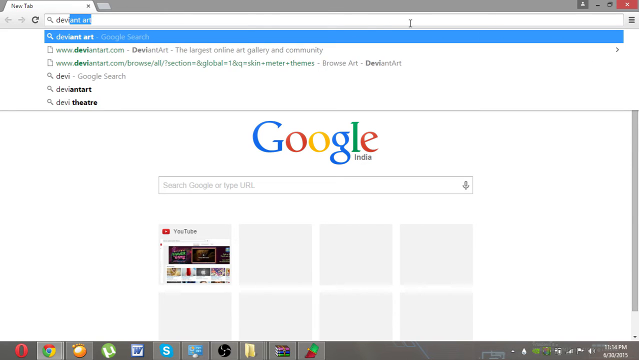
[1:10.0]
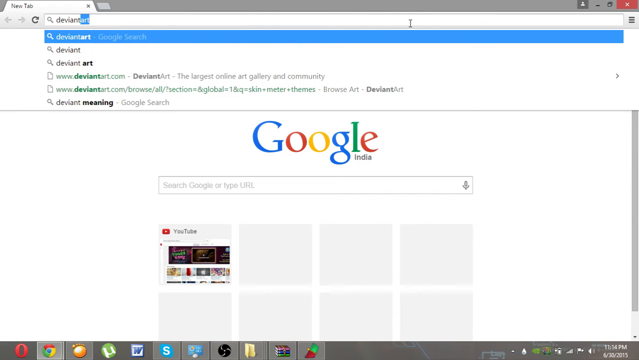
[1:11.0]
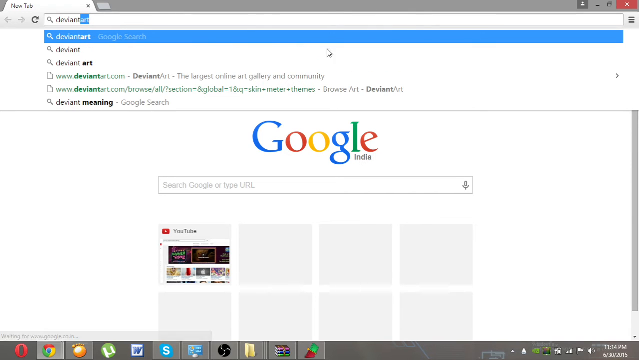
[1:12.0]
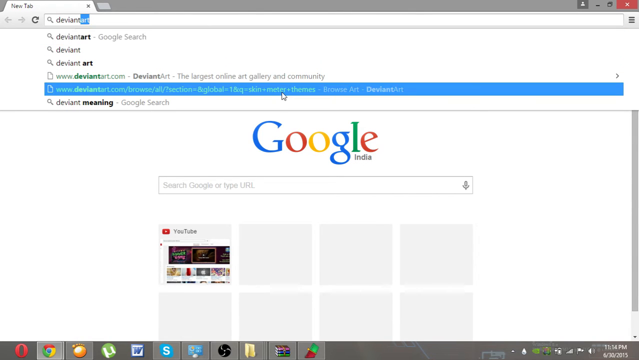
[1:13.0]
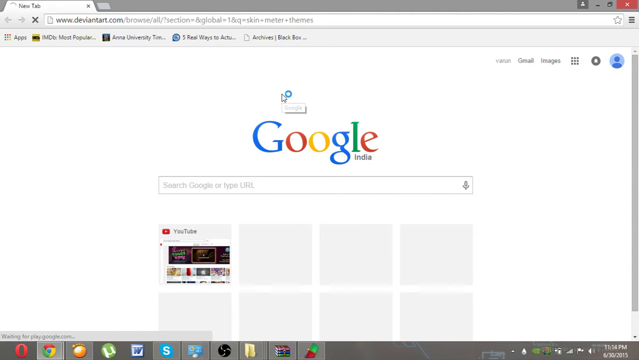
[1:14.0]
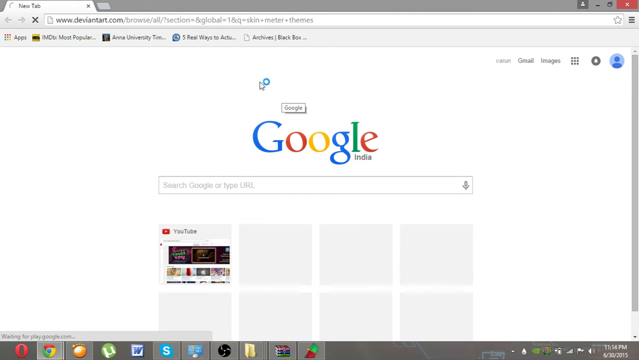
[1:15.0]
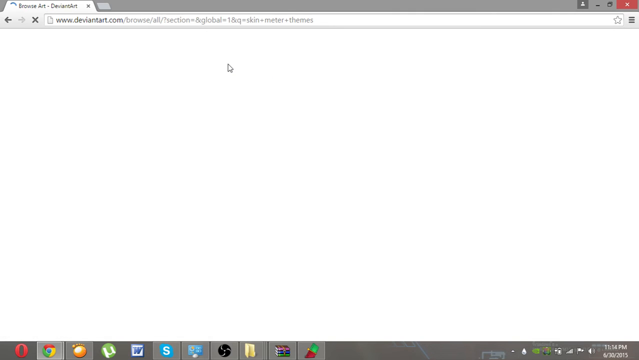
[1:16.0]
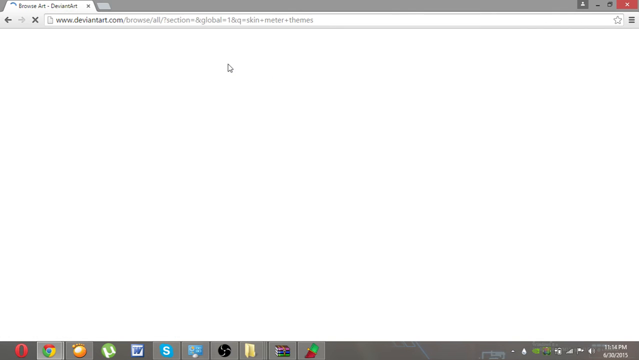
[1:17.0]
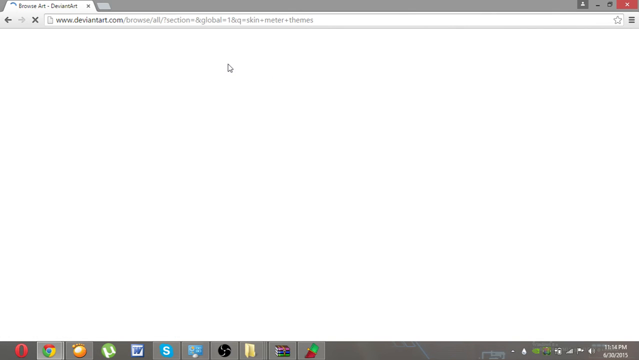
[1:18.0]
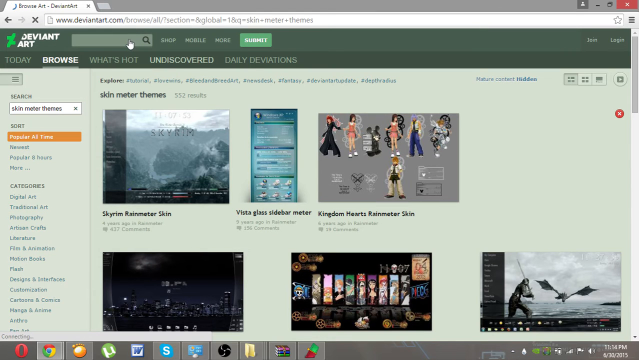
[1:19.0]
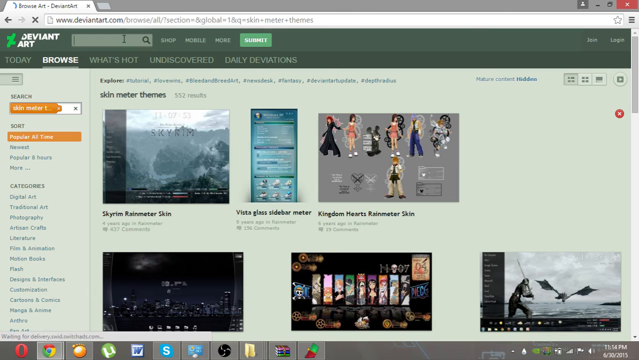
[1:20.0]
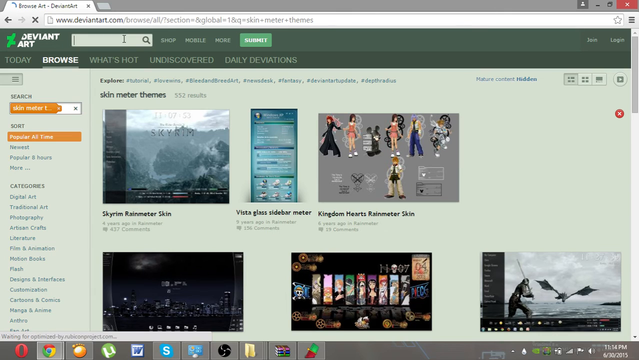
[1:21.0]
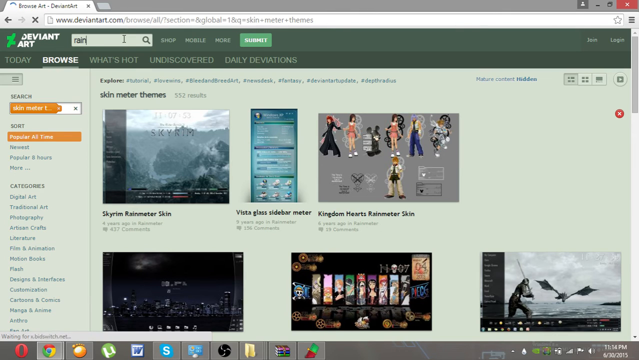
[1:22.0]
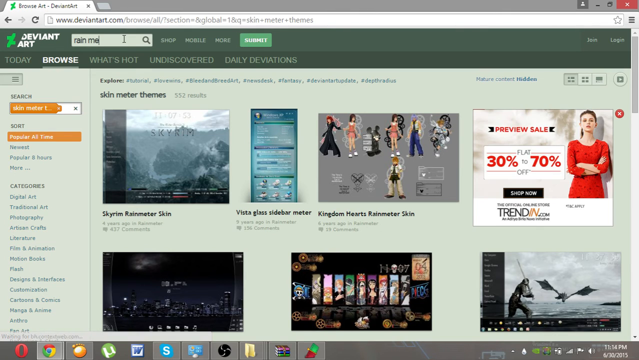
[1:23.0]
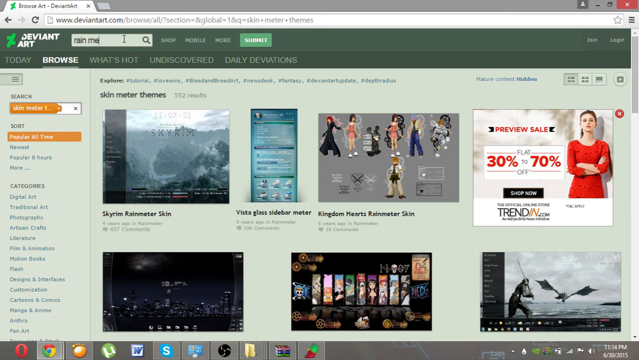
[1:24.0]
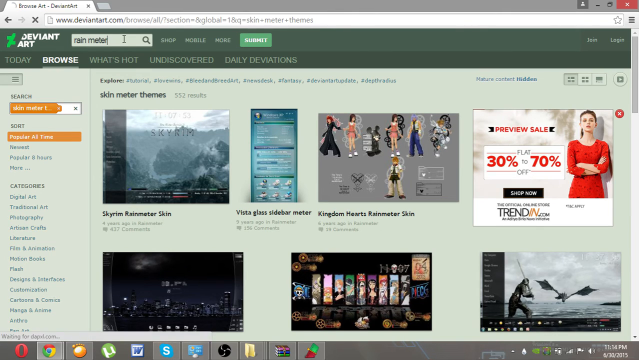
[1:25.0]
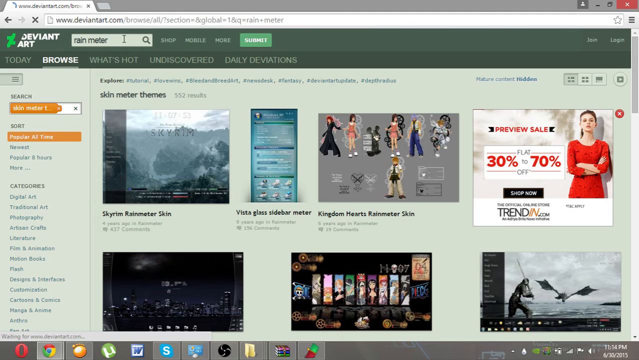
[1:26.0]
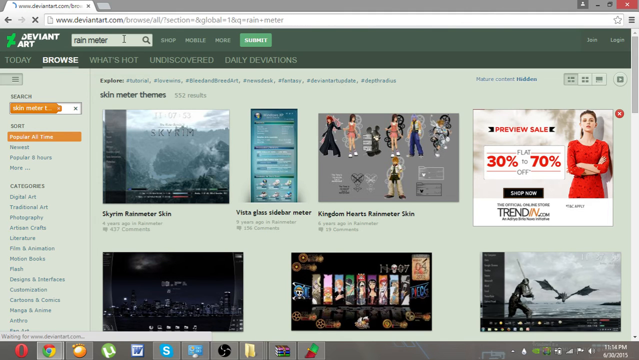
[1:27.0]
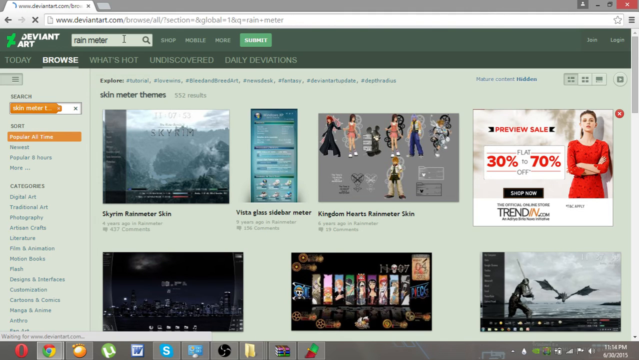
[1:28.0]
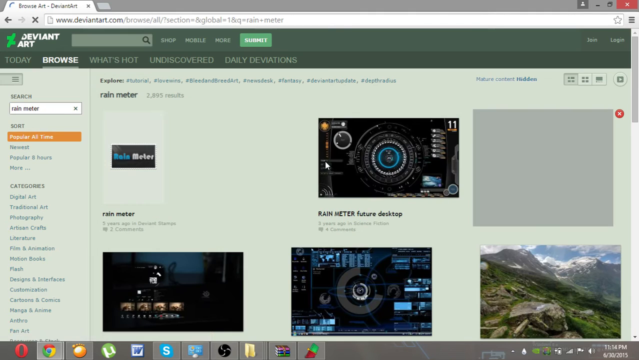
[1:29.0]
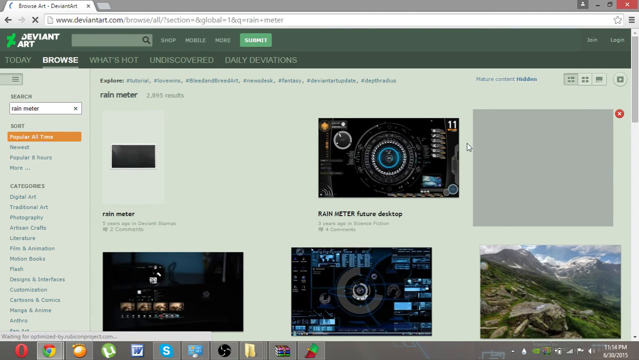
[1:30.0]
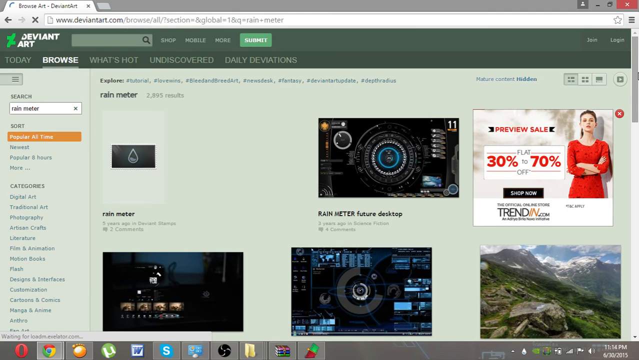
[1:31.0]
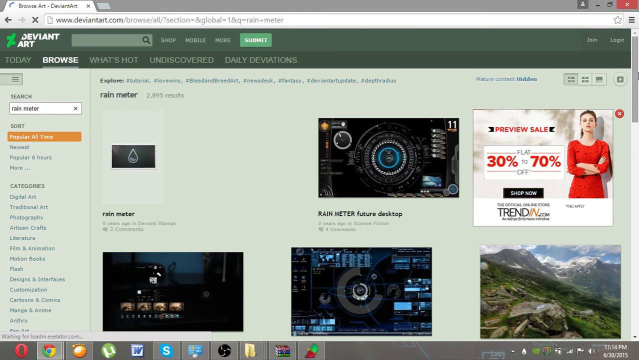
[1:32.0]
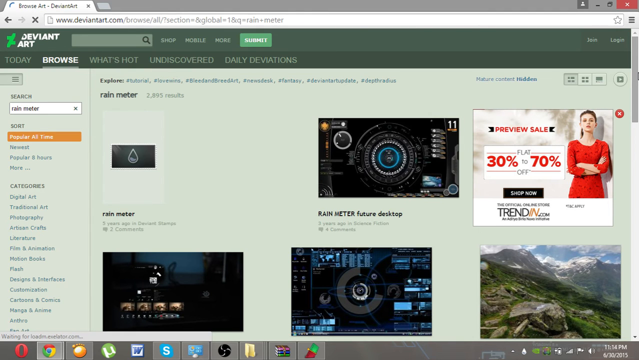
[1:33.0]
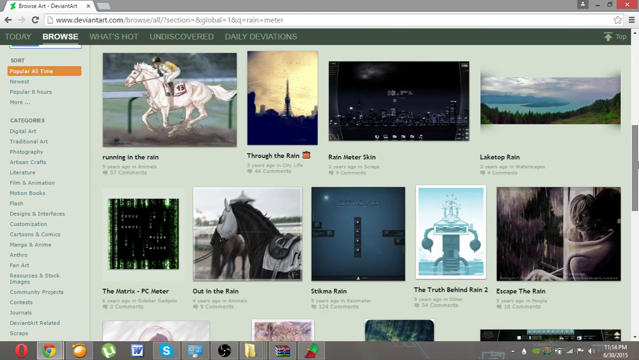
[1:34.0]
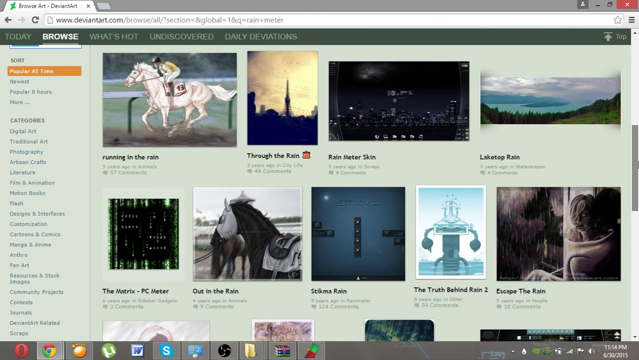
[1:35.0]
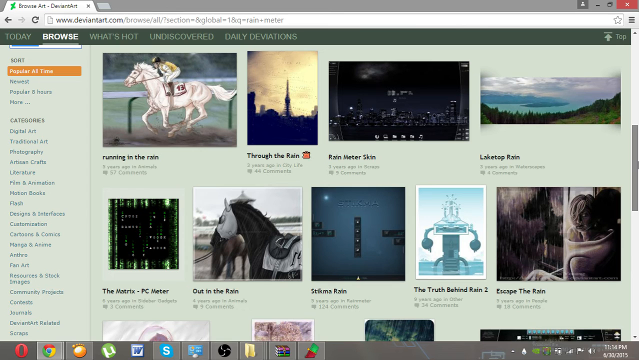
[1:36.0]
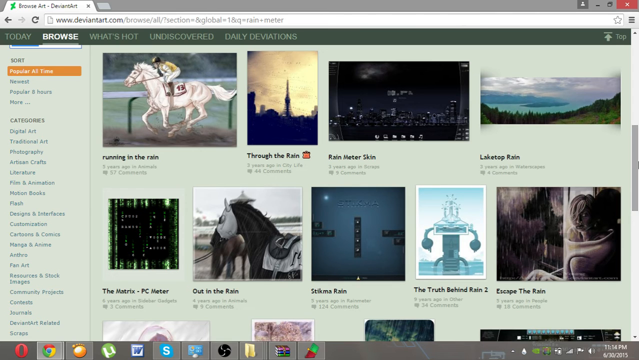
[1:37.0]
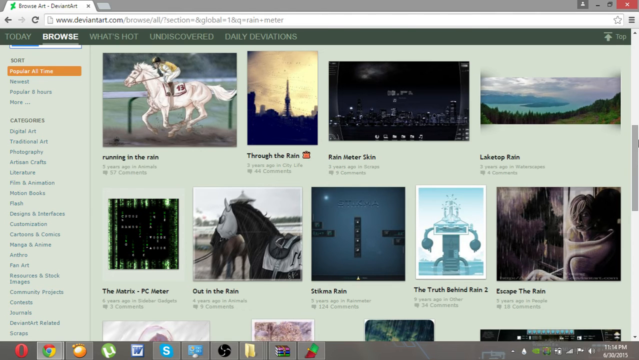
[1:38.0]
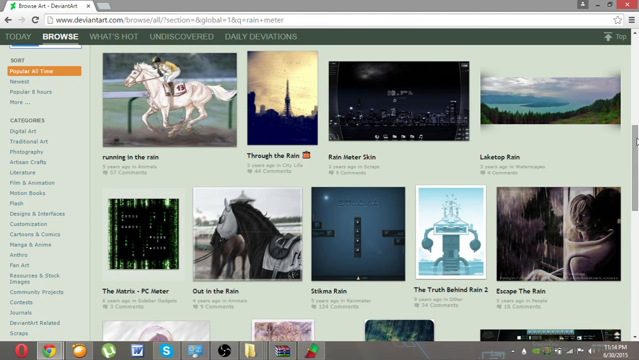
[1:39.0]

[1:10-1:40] The screen is filled with a Chrome browser window. The user selects the address bar at the top and types deviantart into it, then selects deviantart.com/browse/all. The browser switches to the DeviantArt page, showing various images. They type rainmeter into the search bar at the top of DeviantArt, and various images are shown. The mouse hovers over an image titled "Rain Meter Future Desktop". The mouse then moves down to the scroll bar on the right of the screen and slides downwards, scrolling through various other images. These span a variety of styles and genres, from science fiction style desktop images to mountain alpine landscapes, images of horses and jockeys riding horses along racecourses, lakes seen over pine hills, green Matrix text rain, more futuristic styles, and an image of the Eiffel Tower in the rain.